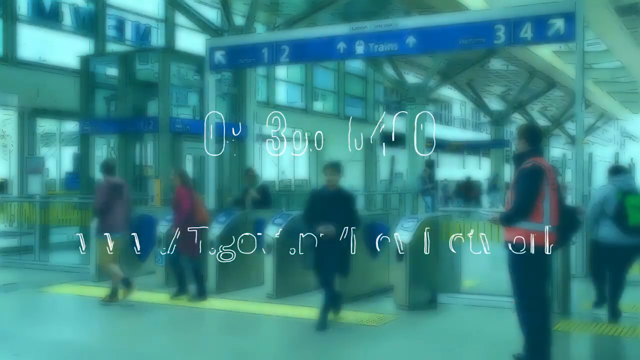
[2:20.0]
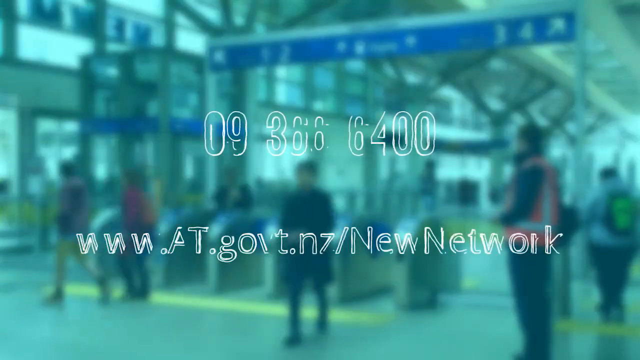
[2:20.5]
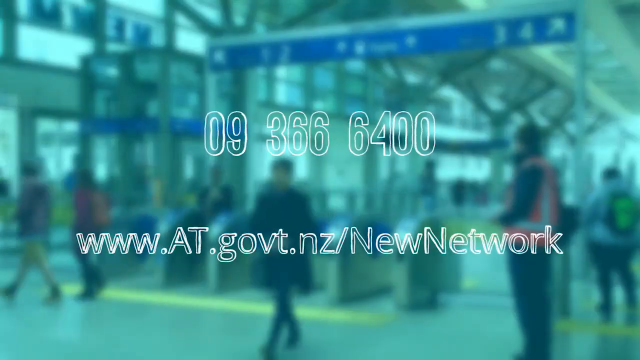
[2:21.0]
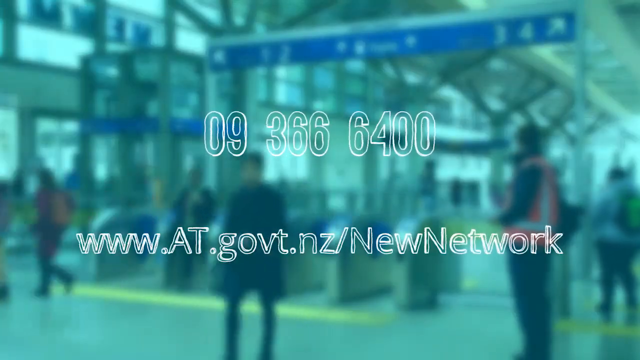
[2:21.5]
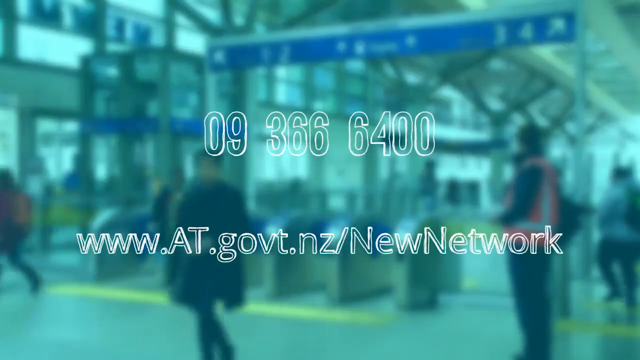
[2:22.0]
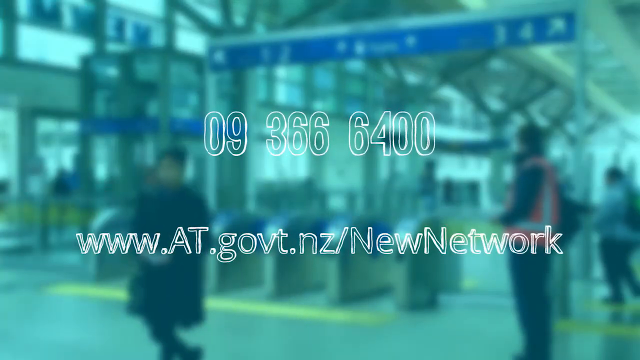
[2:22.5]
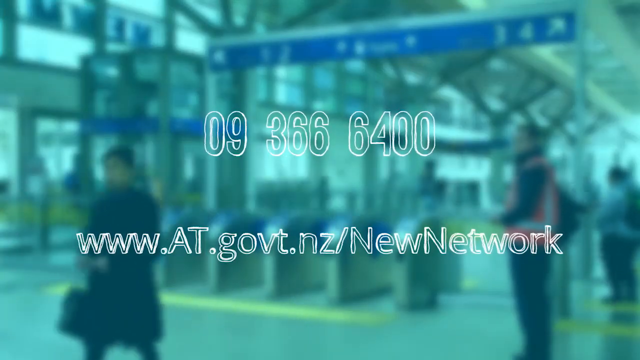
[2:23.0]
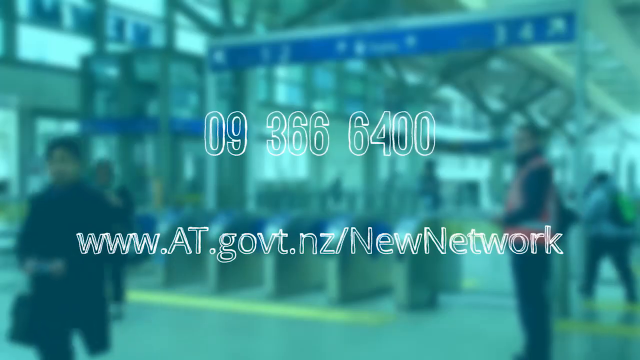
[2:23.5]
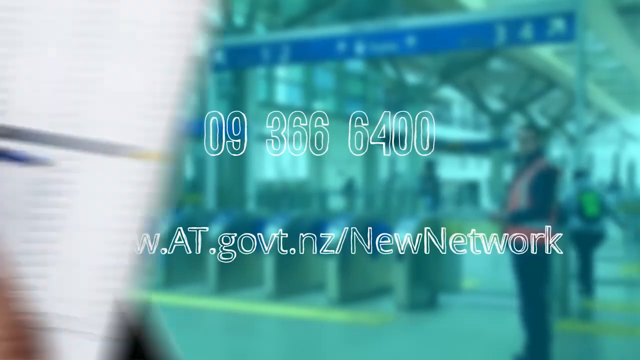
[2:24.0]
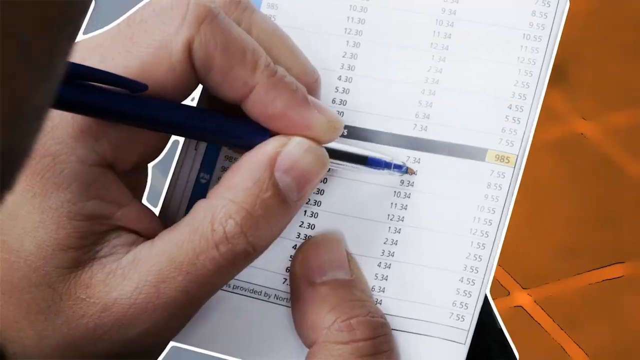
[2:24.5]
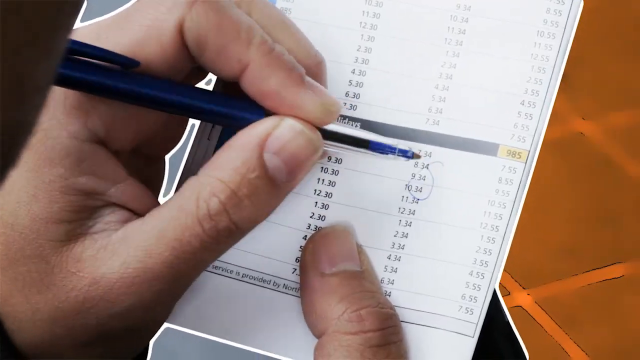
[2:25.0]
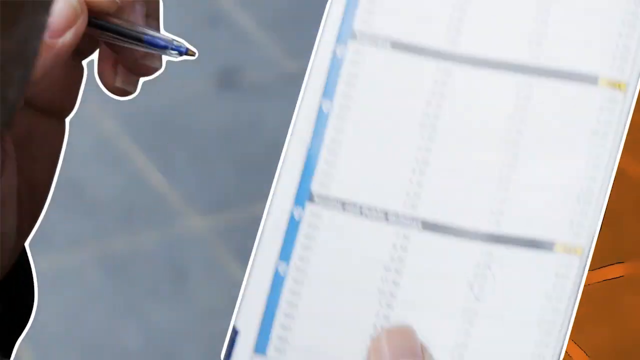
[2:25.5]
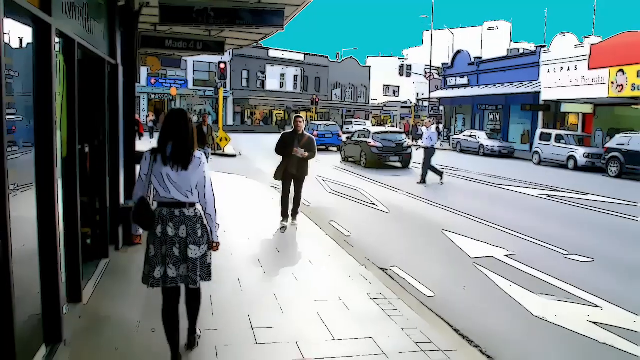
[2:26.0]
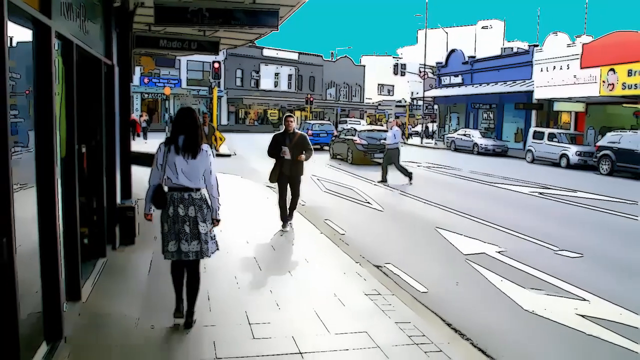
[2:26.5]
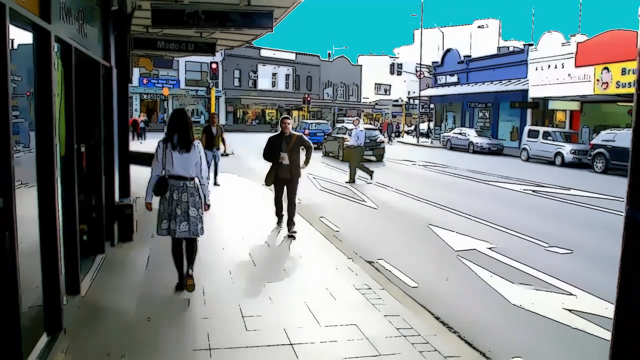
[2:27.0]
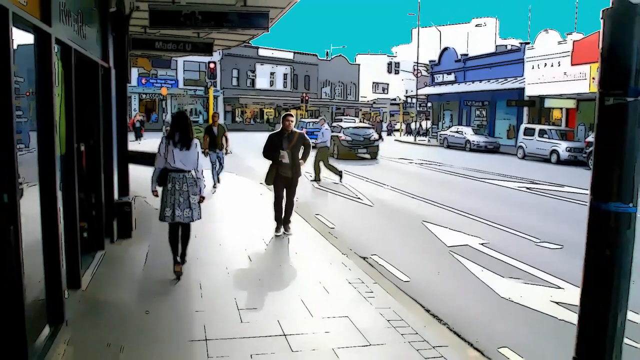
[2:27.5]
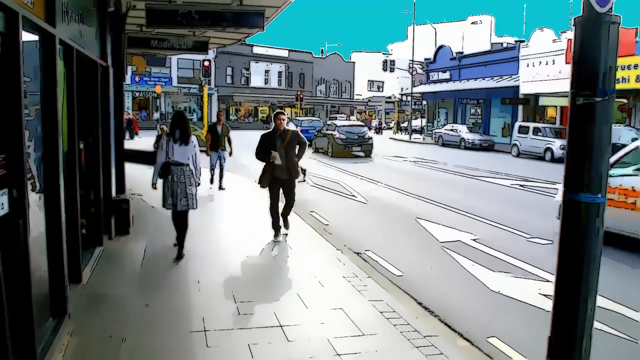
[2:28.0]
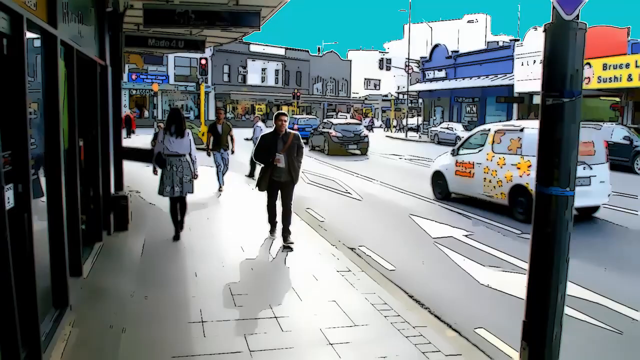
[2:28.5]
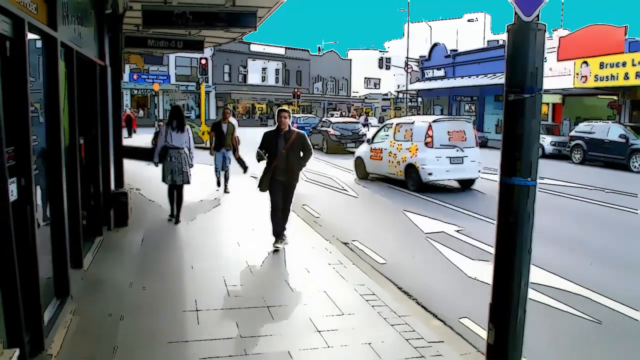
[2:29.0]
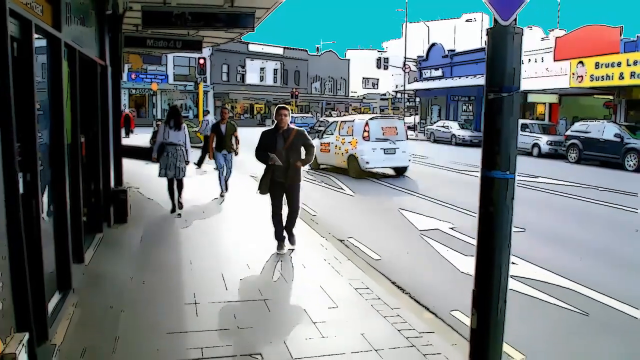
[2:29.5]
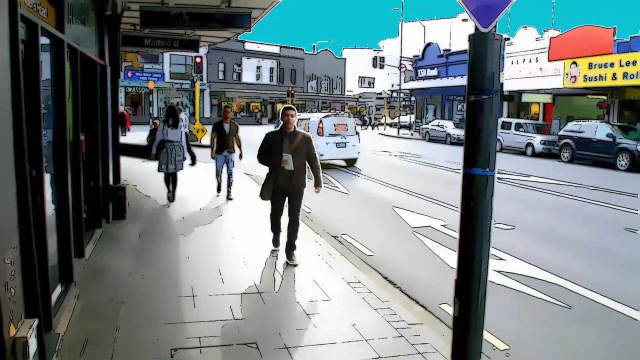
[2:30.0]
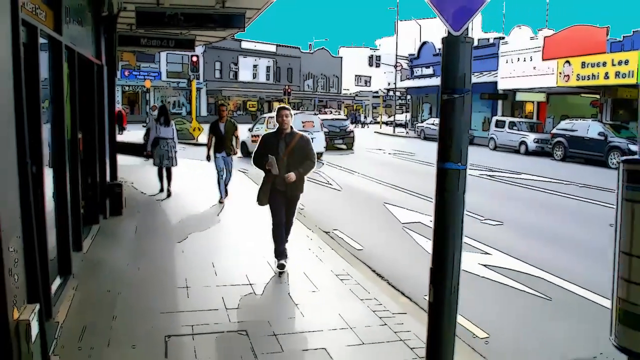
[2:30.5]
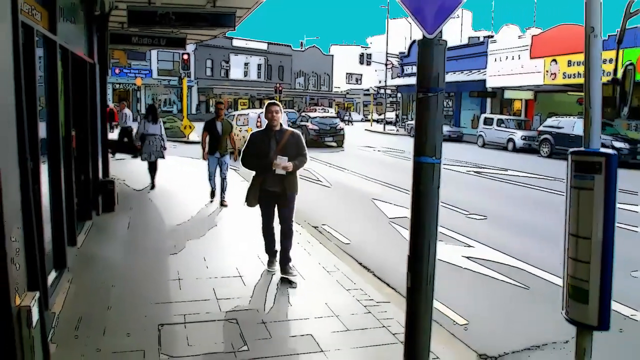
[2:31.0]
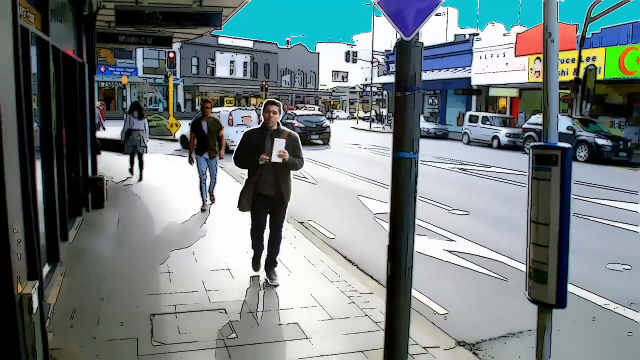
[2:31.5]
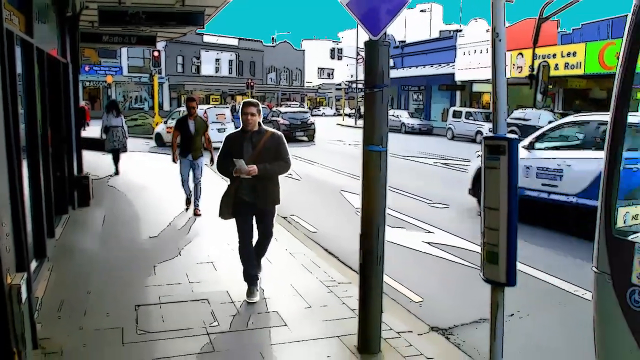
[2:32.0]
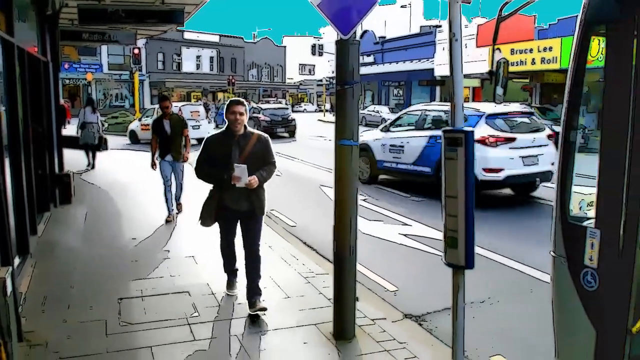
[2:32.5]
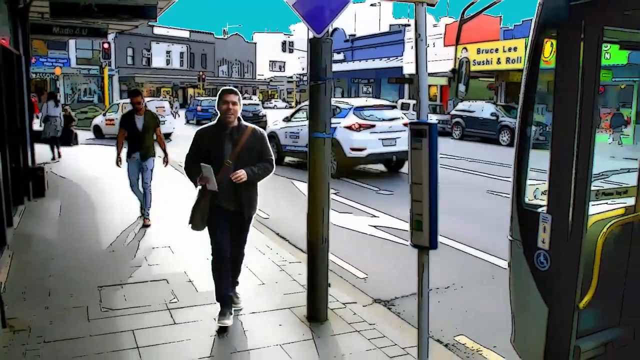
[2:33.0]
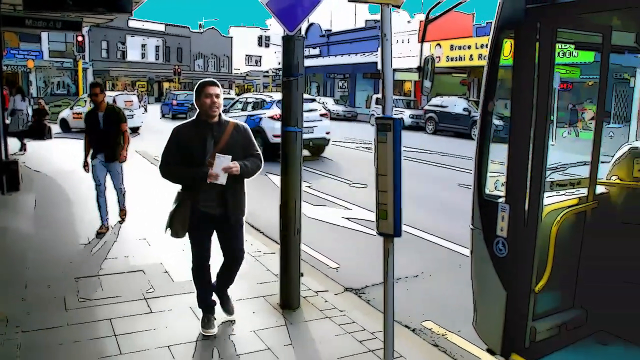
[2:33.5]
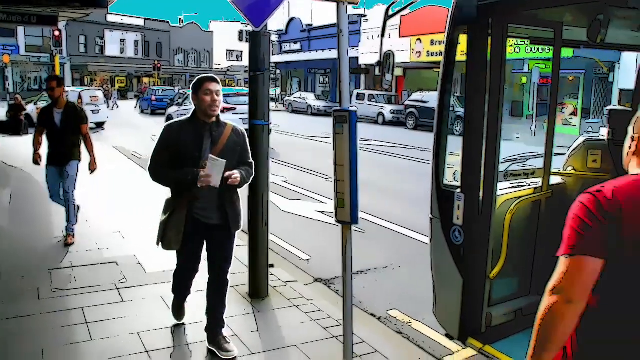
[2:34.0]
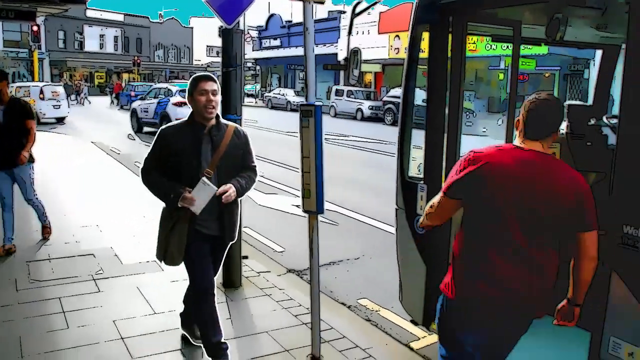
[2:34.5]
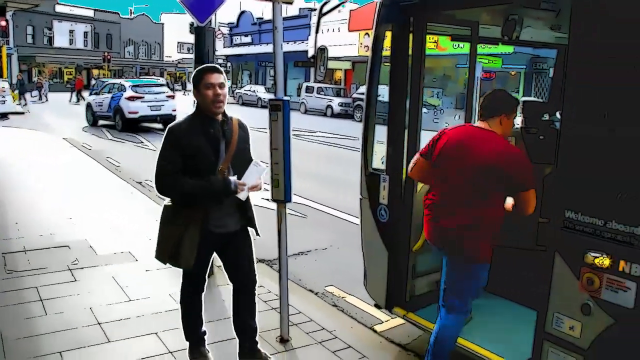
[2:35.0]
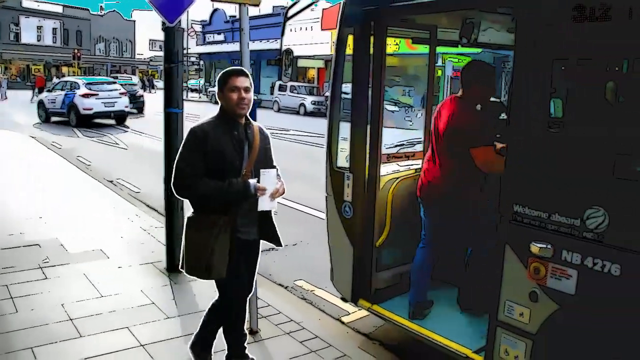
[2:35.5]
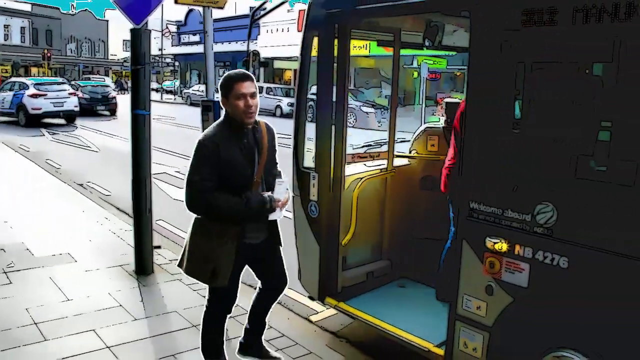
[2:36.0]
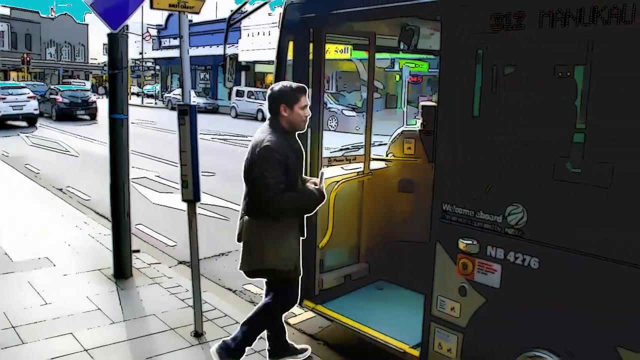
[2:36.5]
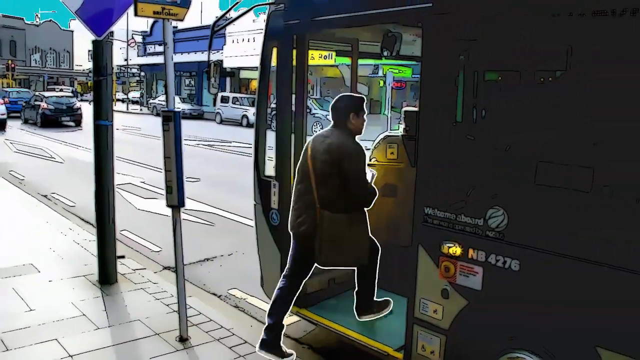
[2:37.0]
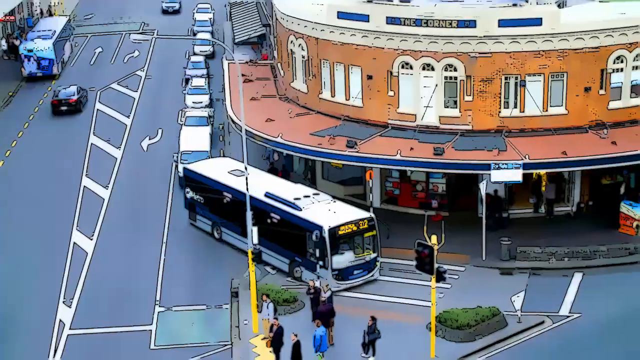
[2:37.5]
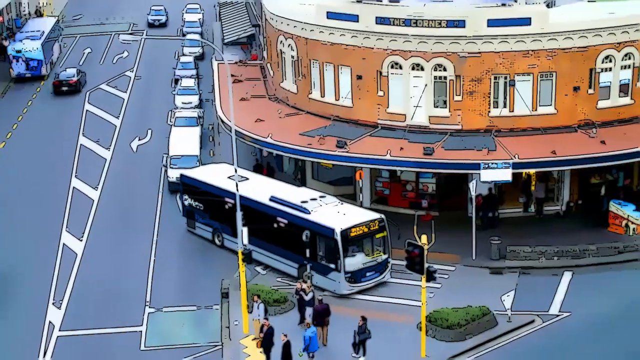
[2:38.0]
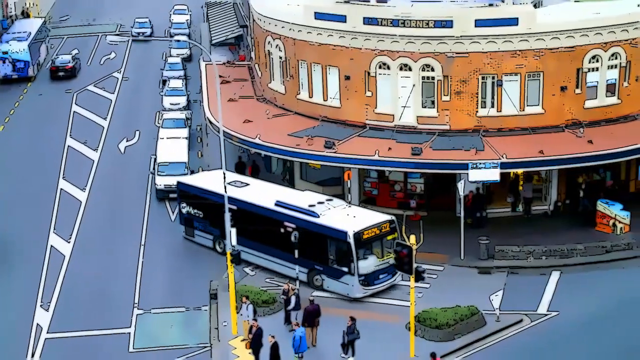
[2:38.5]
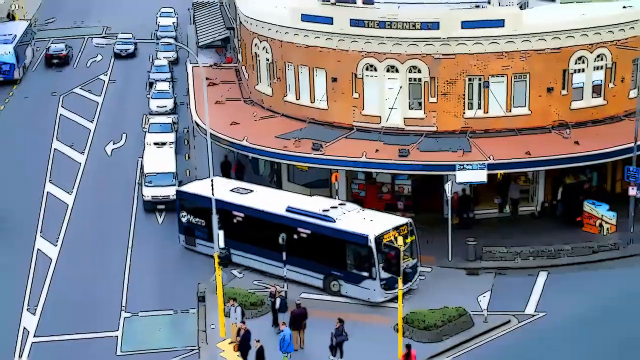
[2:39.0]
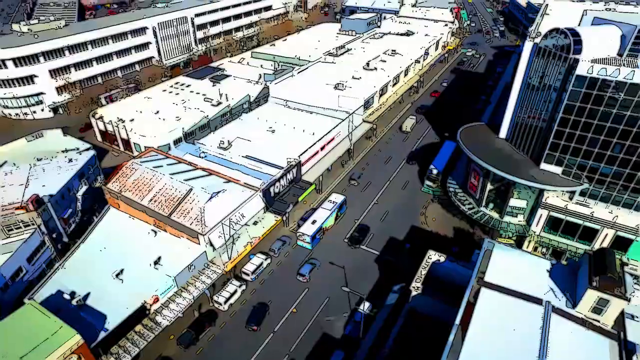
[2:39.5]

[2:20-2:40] A blurred view of the train station with the ticket area appears, and a white information page comes over the top reading "093666400" and then "www.at.govt.nz/new network", with blurred figures walking towards the camera. The page changes to a close-up of someone's hand with a pen marking the public holidays on a leaflet, along with specific times, perhaps for a bus or train. The man with the white outline and shoulder bag walks towards the camera in a shopping retail area, with a road at the front and a T-junction at the back, and a woman in a patterned black and white skirt and white shirt walking away from the camera. The outlined man reaches into his pocket with the leaflet in his hand, talking to the camera; he gets out or puts back something in his pocket and moves the leaflet from hand to hand. He goes towards a bus stop where a bus is parked, and a man in a red T-shirt gets onto the bus. The outlined man talks to the camera for a few seconds, smiles and steps onto the bus. An aerial shot shows the bus going round the corner, seen from above.